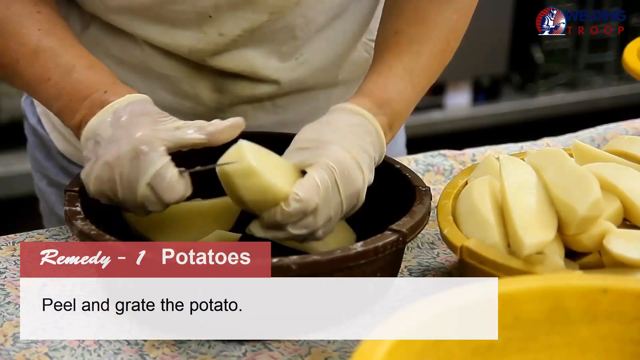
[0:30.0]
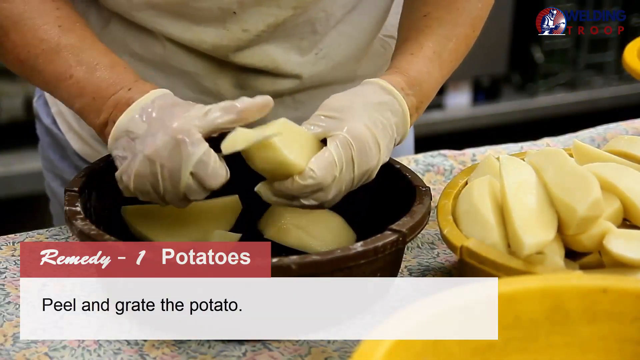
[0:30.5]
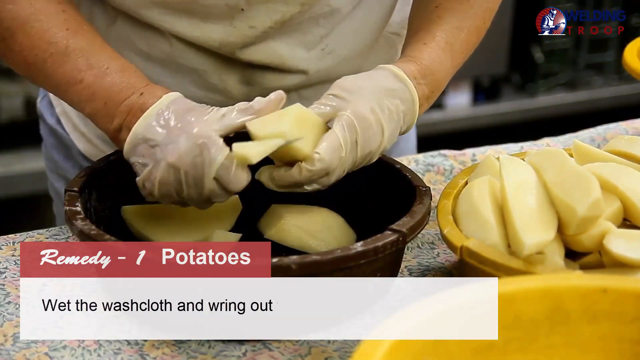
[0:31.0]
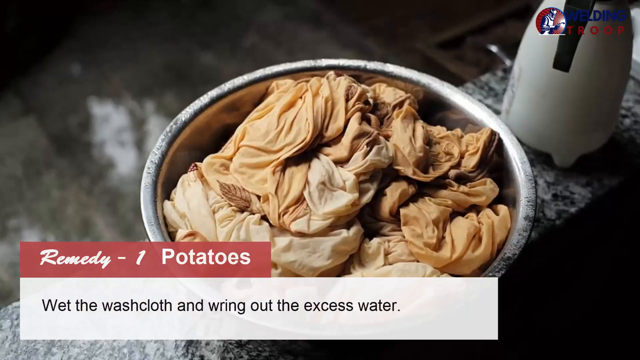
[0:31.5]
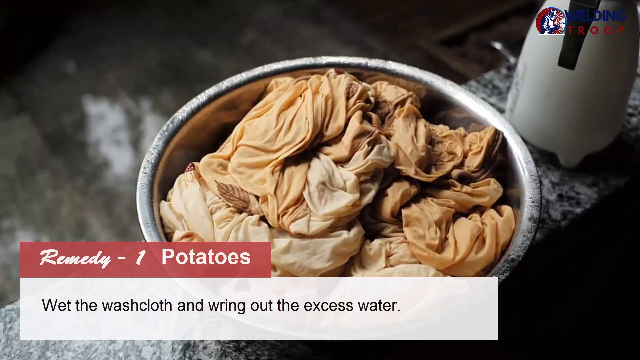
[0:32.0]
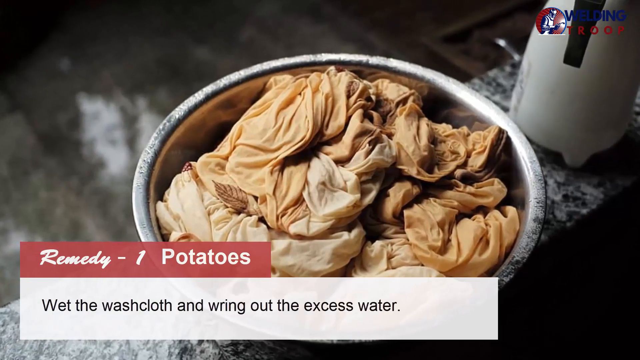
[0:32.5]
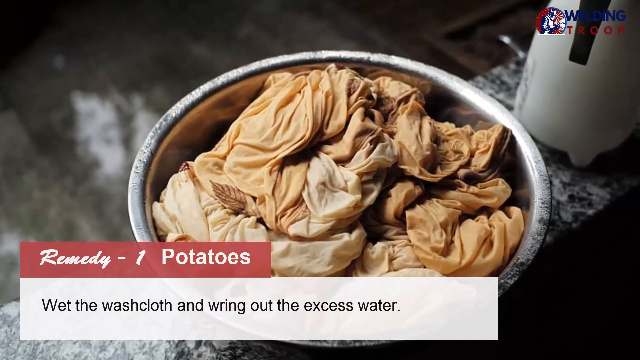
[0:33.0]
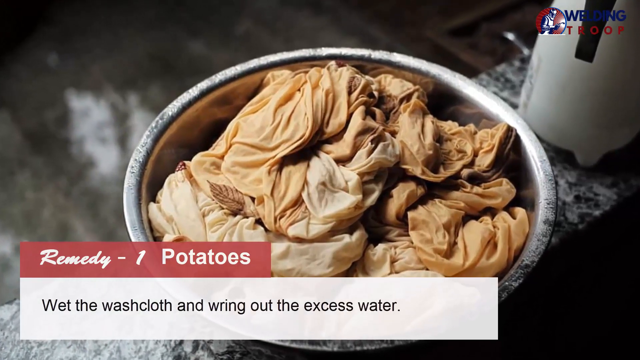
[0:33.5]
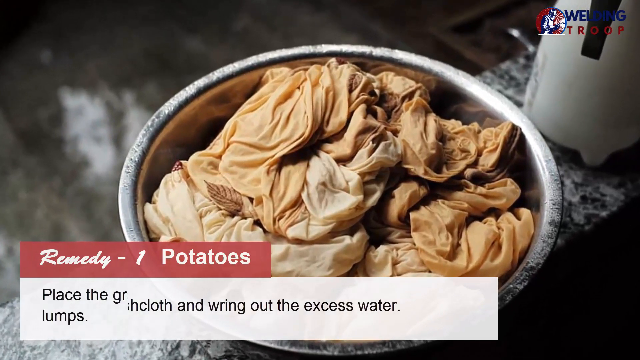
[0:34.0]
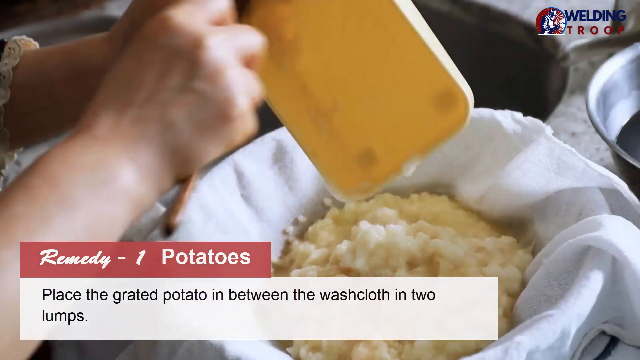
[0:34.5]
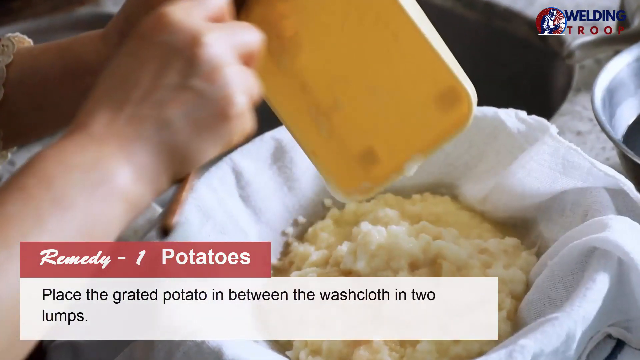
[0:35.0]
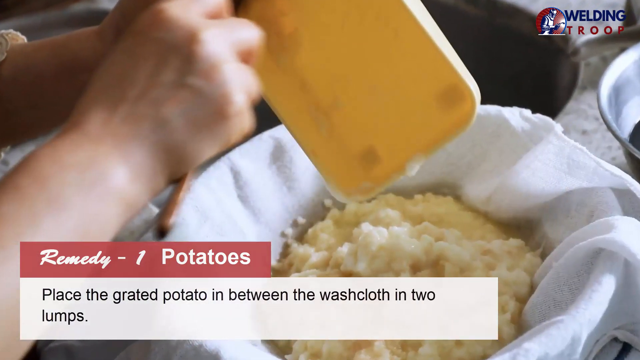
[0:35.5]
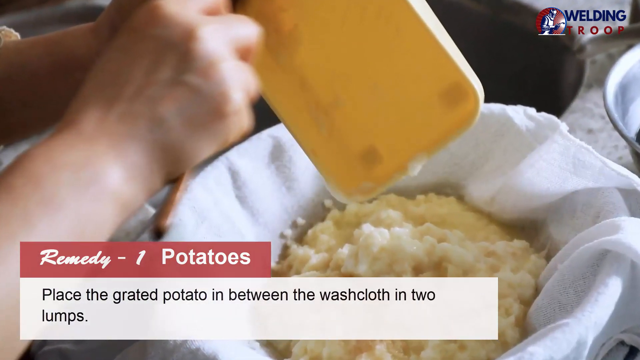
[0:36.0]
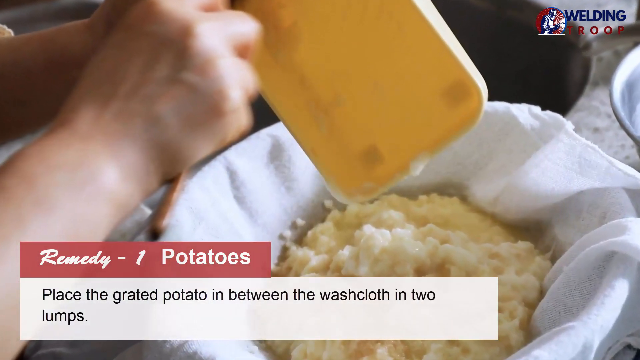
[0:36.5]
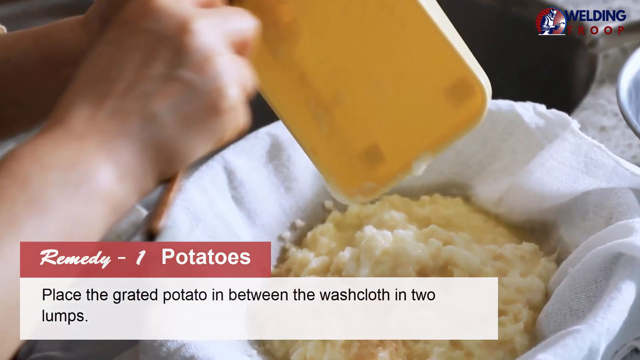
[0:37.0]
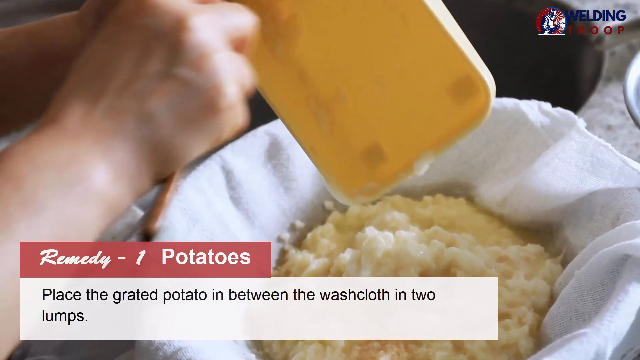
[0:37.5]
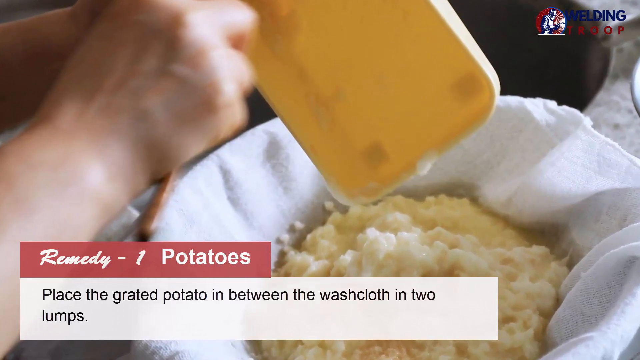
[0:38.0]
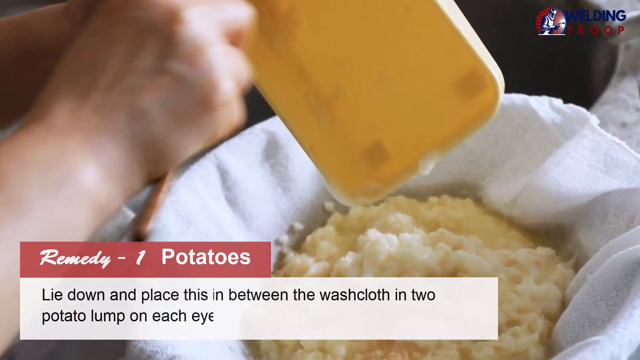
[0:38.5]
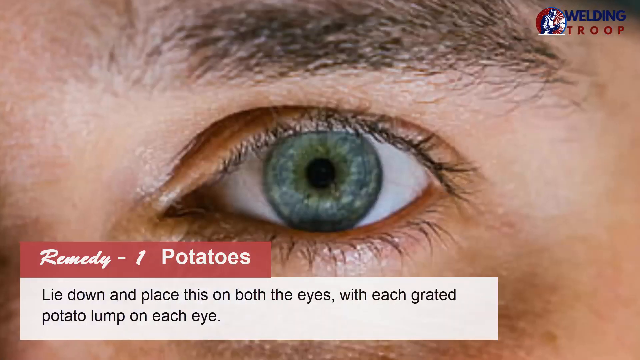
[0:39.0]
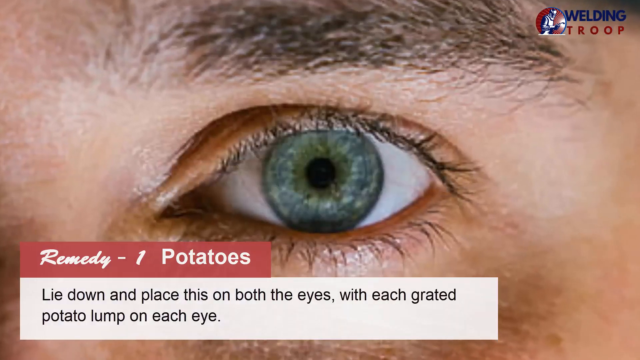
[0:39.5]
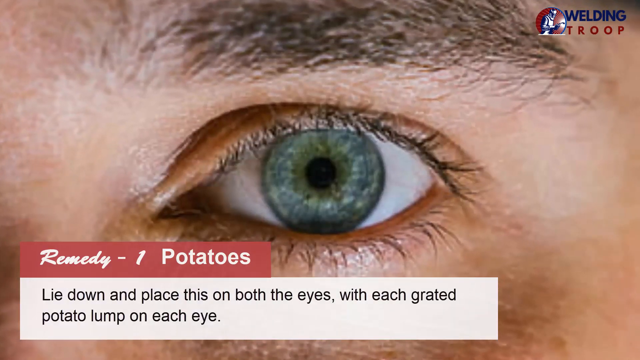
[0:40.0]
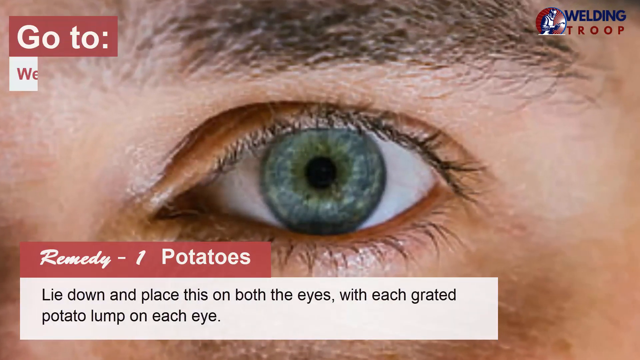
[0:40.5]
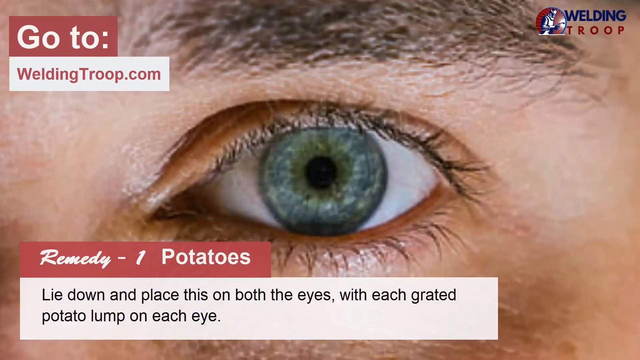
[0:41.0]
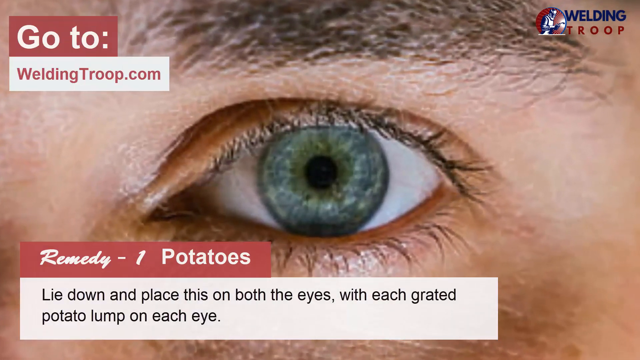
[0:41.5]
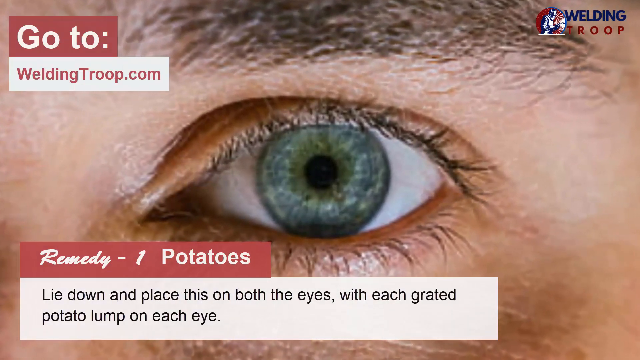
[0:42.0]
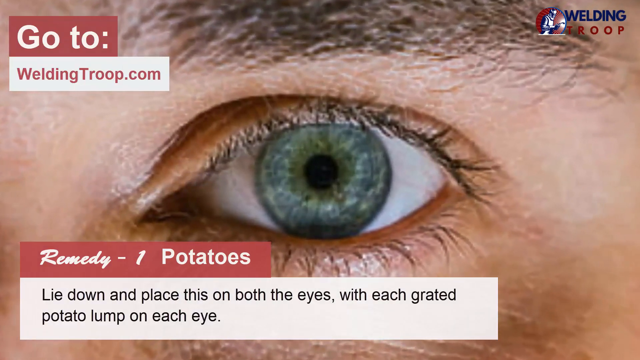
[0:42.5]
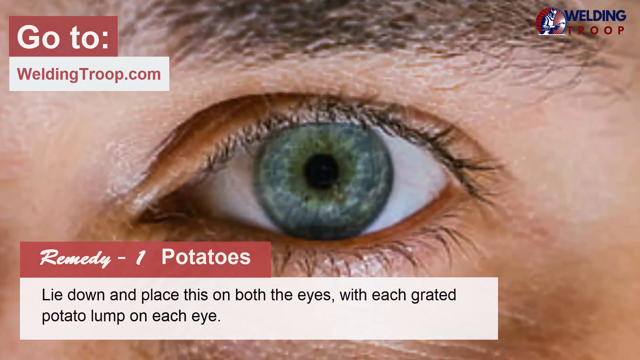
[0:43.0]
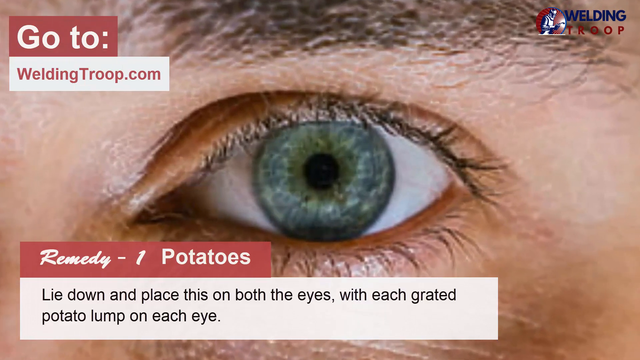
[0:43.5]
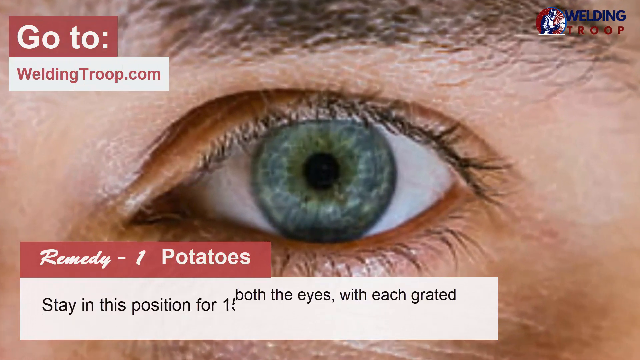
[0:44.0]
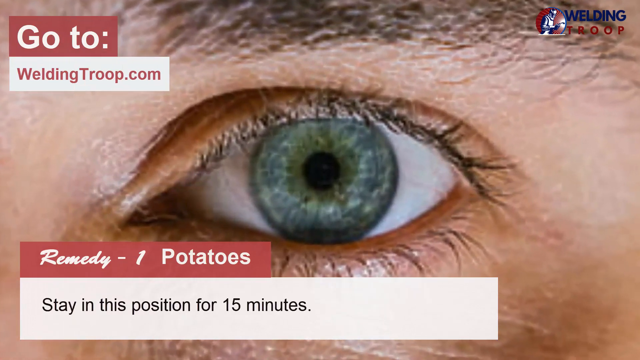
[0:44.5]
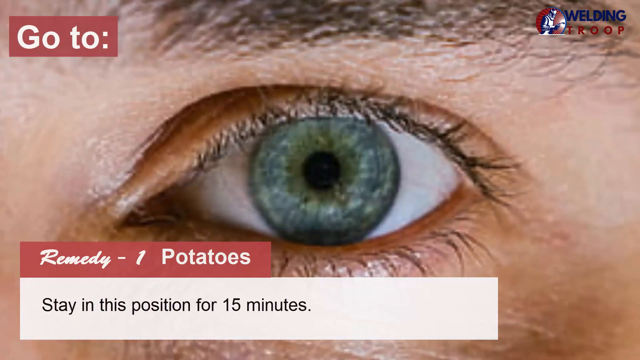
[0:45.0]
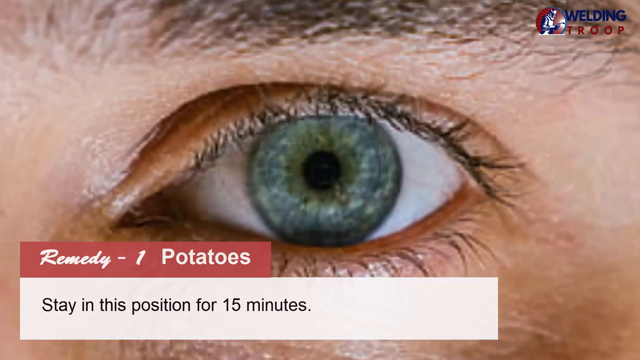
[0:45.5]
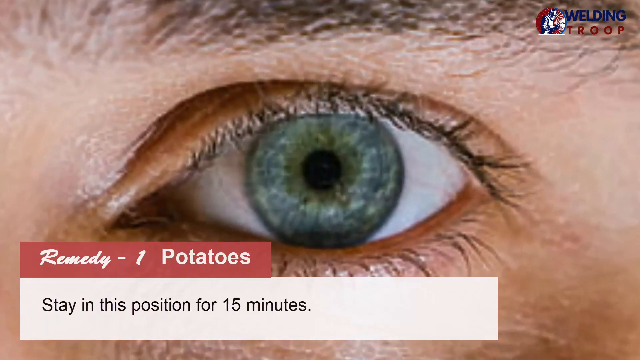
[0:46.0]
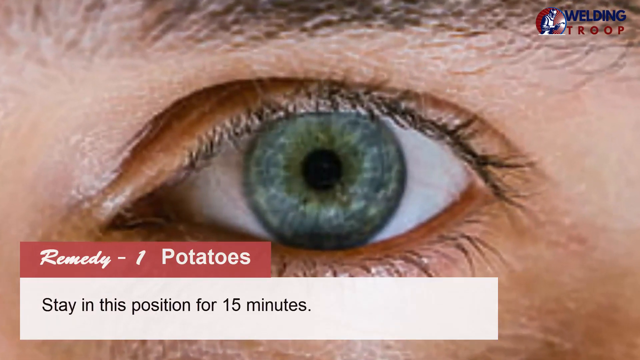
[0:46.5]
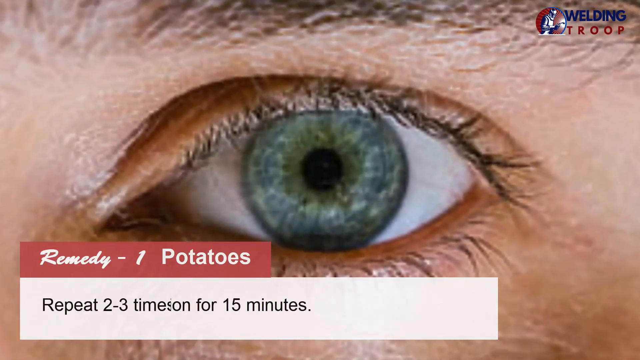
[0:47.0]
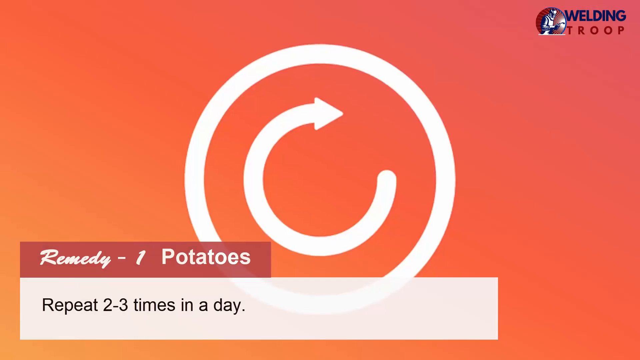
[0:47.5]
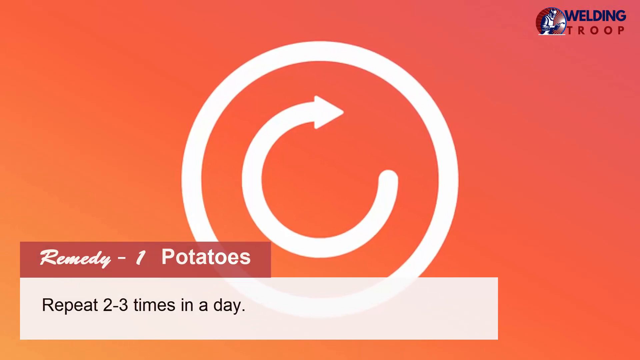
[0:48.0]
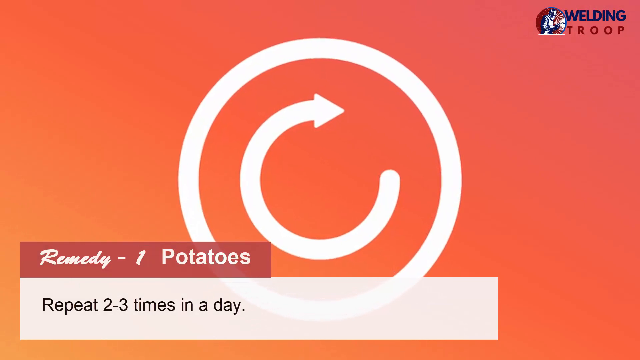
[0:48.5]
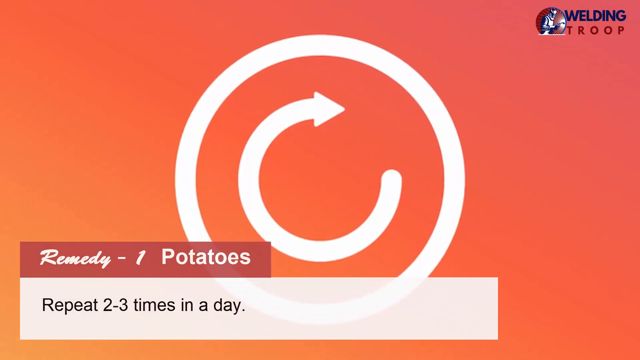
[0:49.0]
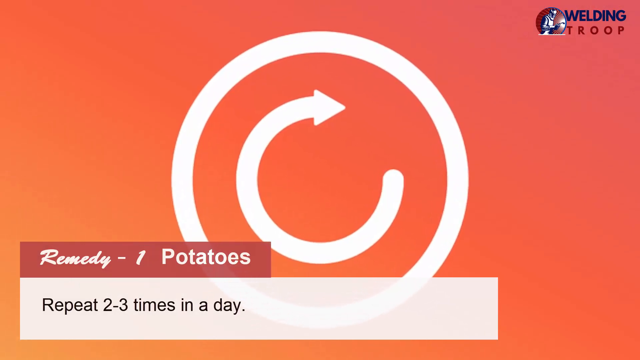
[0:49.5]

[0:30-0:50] The man continues peeling potatoes over a brown bowl. A bucket filled with washcloths appears, with text about wetting the washcloth and wringing out the excess water; the washcloths look kind of dirty. Text about placing the grated potato in between the washcloth in two lumps accompanies a shot of the potatoes in a bowl, with the washcloth kind of cupping the potatoes, between the potatoes and the bowl. Text then instructs lying down and placing this on both eyes, one grated potato lump on each eye, over a close-up of an eye. In the top left, text says "go to" with the website weldingtroop.com. Further text instructs staying in this position for 15 minutes and says "Repeat two to three times in a day," with a repeat symbol, like a circle with an arrow, in the background.